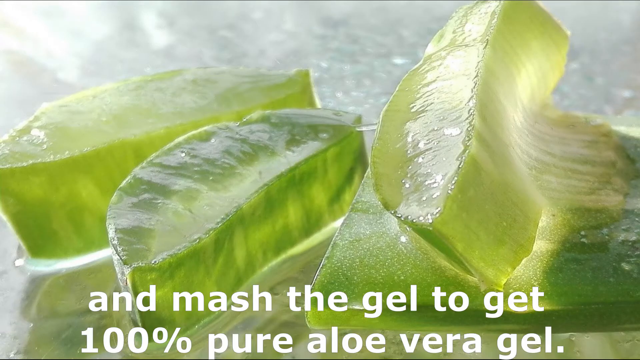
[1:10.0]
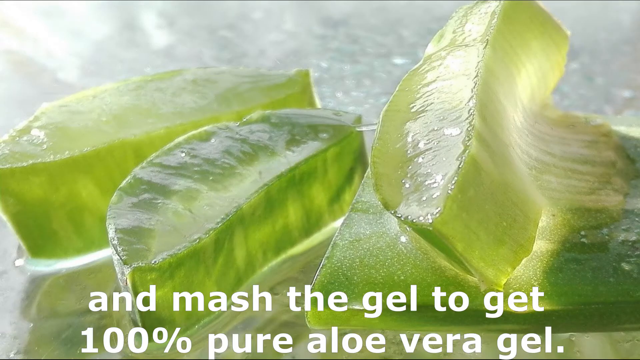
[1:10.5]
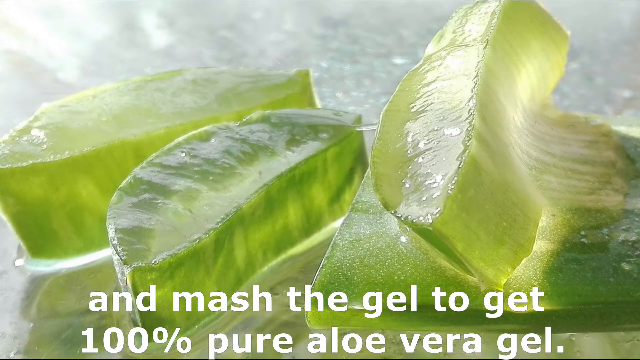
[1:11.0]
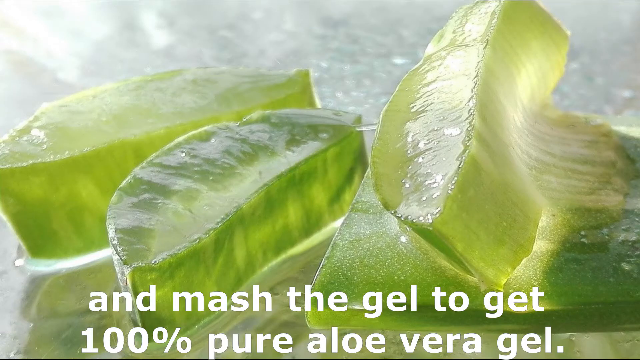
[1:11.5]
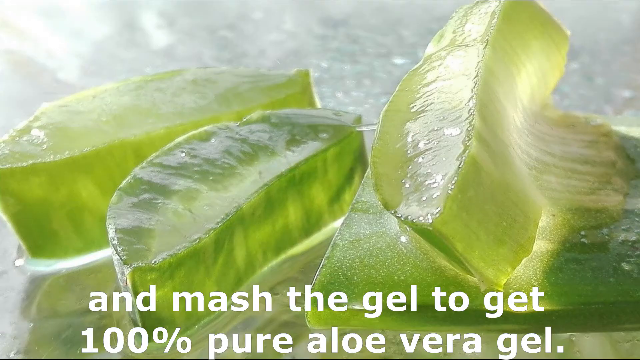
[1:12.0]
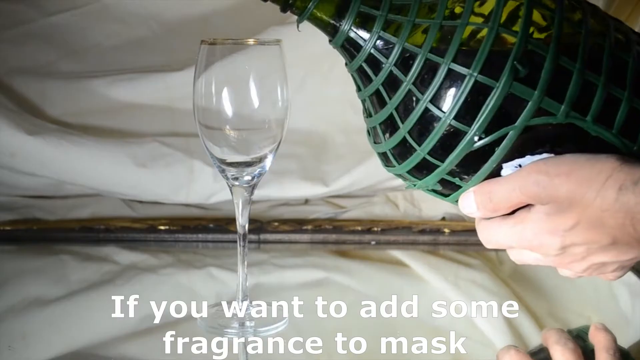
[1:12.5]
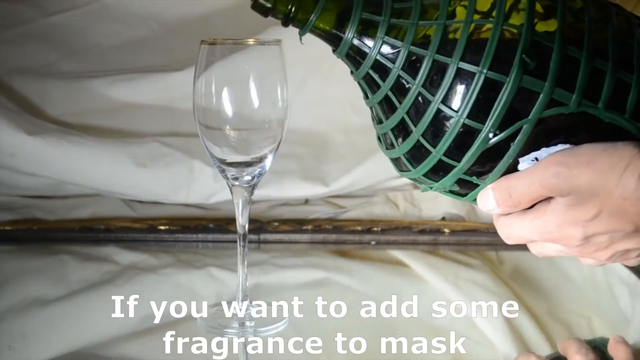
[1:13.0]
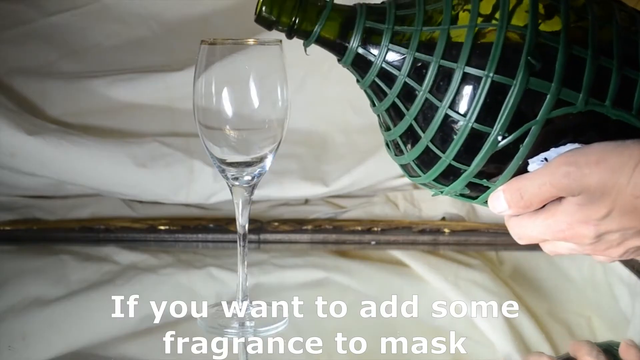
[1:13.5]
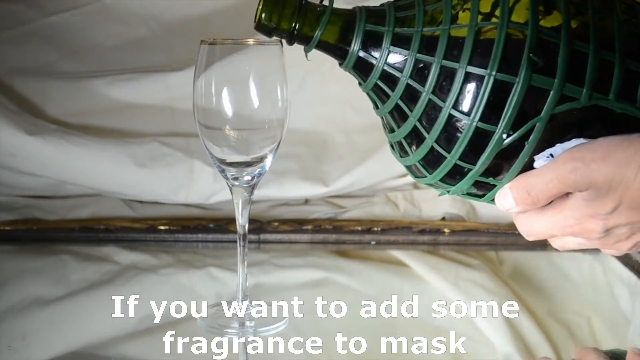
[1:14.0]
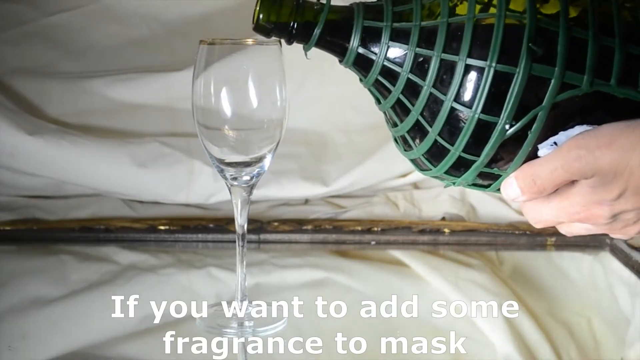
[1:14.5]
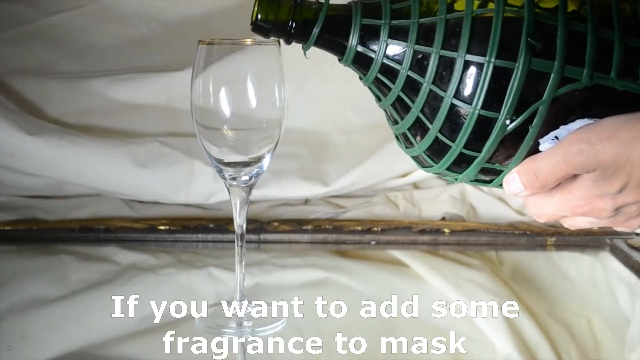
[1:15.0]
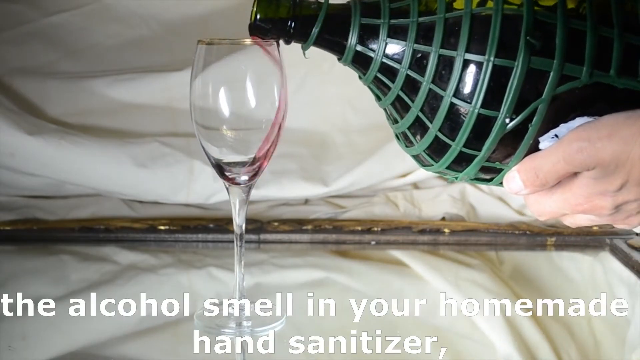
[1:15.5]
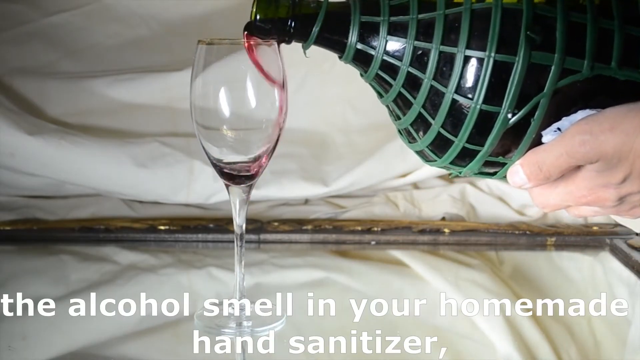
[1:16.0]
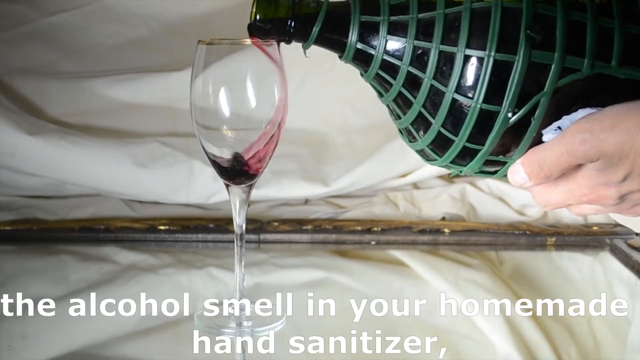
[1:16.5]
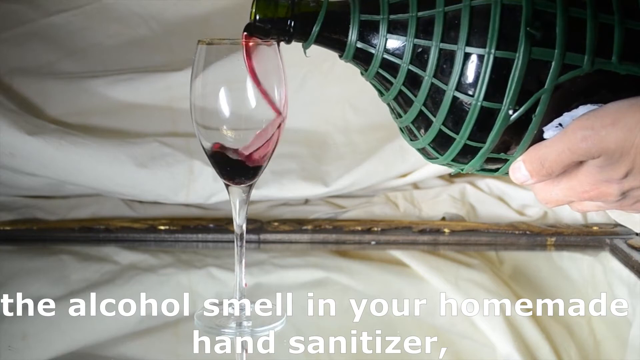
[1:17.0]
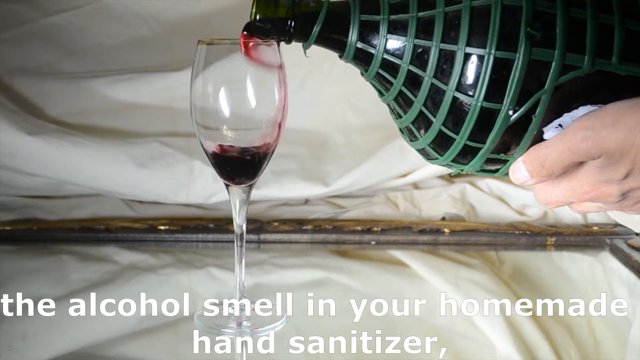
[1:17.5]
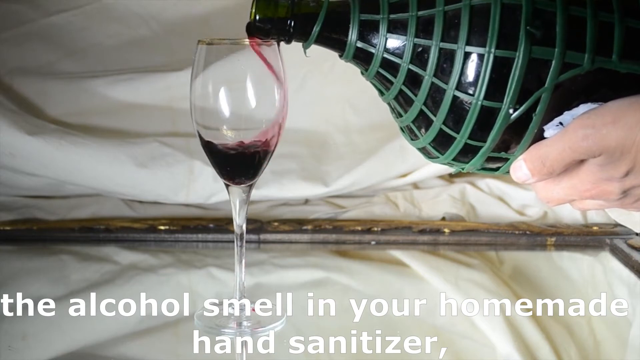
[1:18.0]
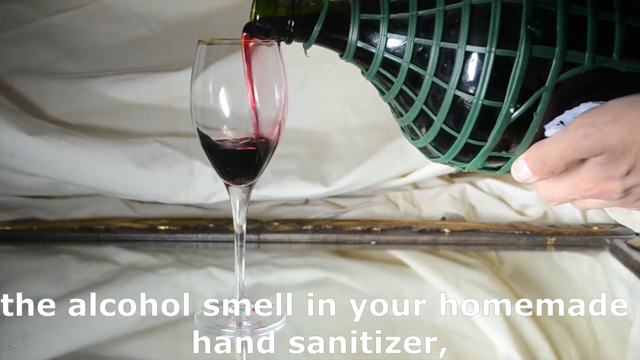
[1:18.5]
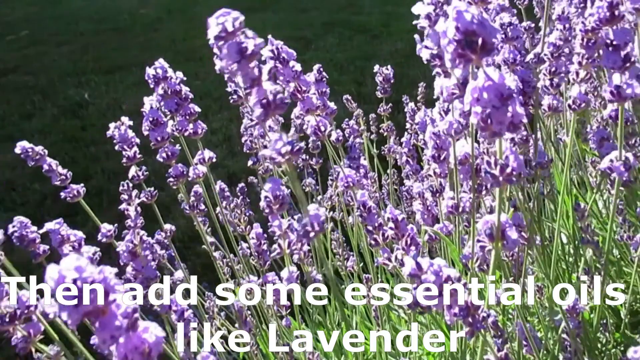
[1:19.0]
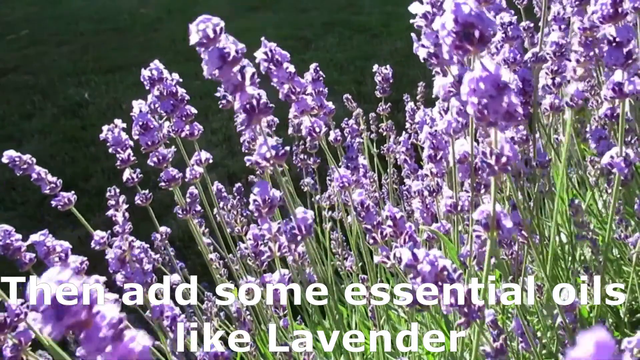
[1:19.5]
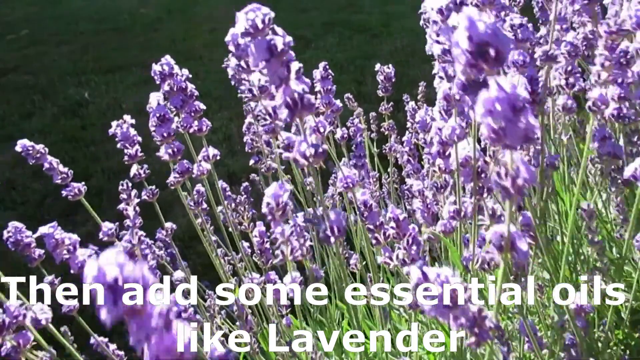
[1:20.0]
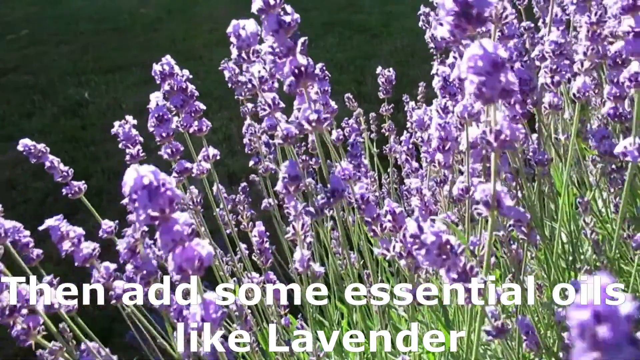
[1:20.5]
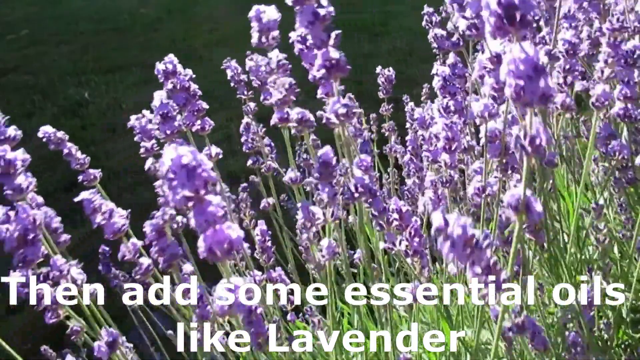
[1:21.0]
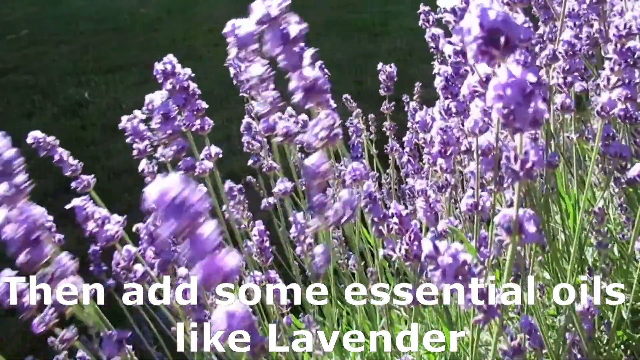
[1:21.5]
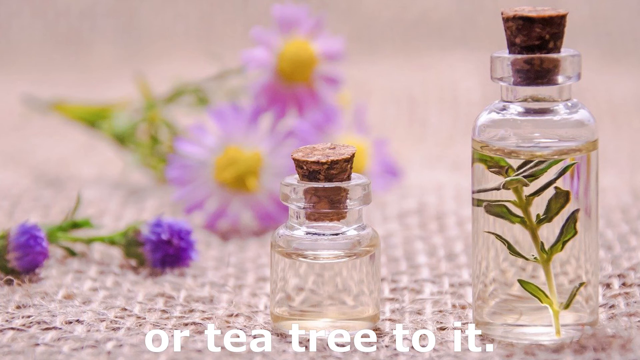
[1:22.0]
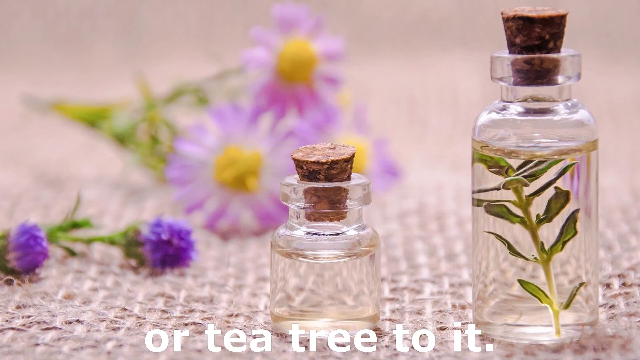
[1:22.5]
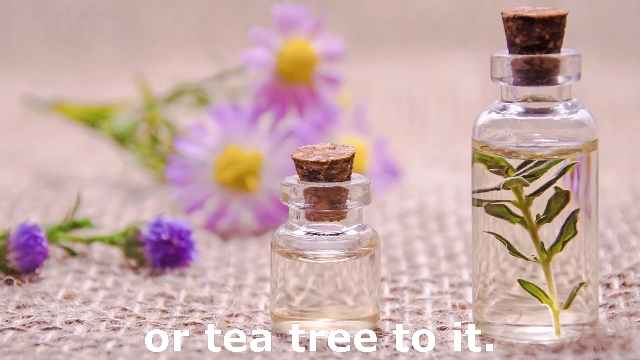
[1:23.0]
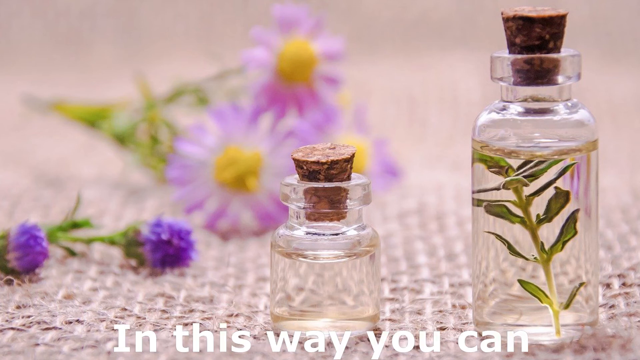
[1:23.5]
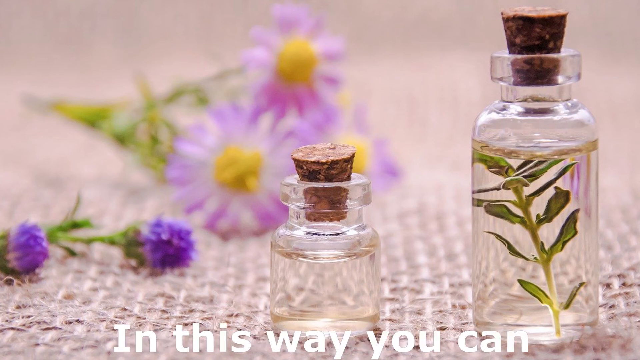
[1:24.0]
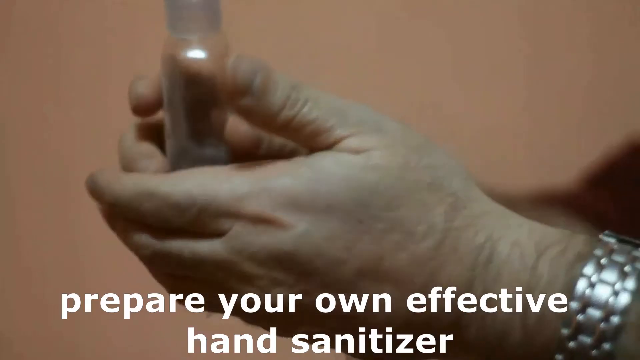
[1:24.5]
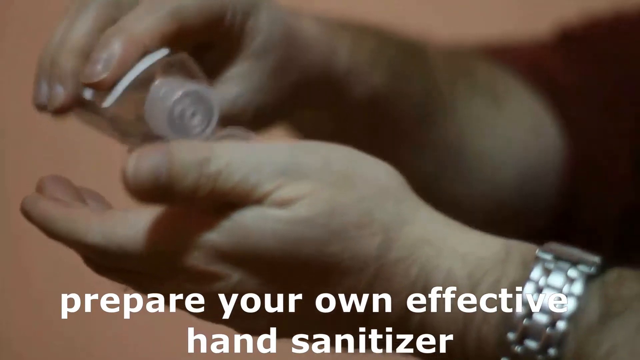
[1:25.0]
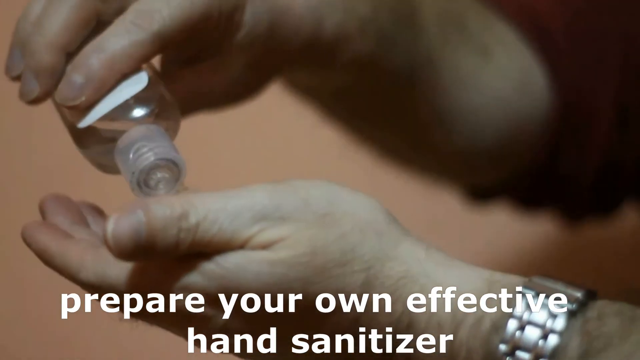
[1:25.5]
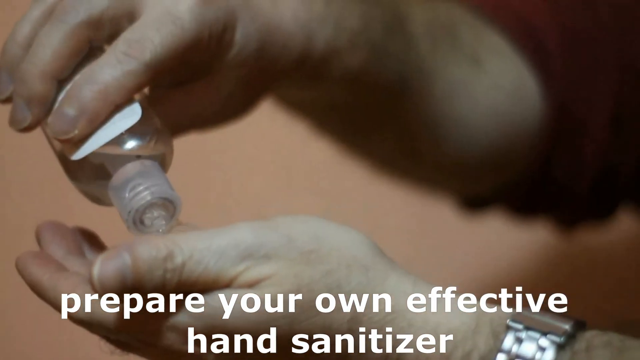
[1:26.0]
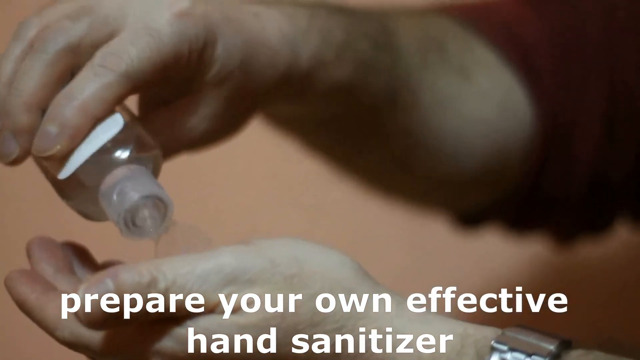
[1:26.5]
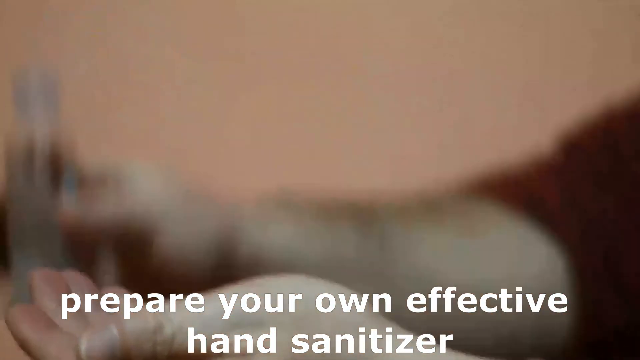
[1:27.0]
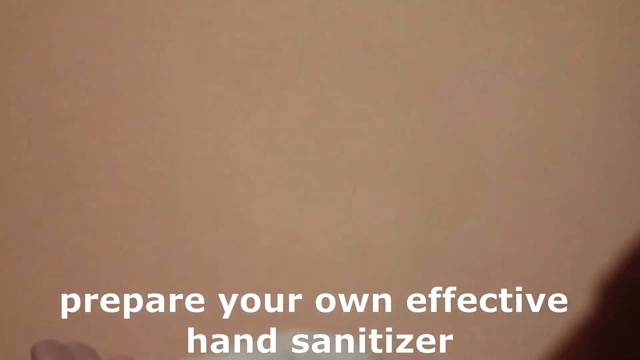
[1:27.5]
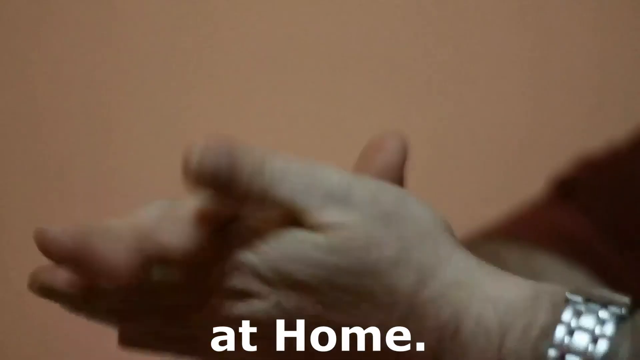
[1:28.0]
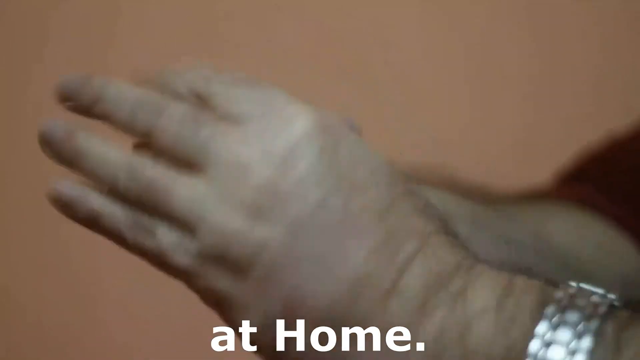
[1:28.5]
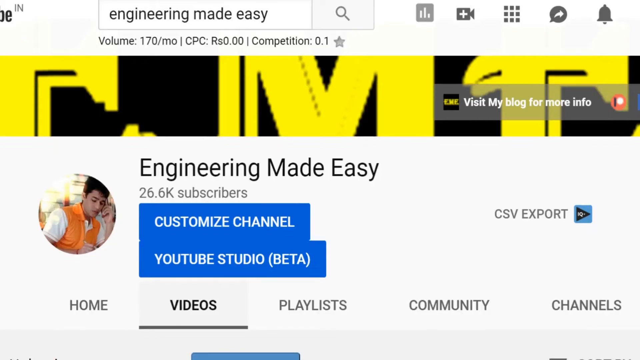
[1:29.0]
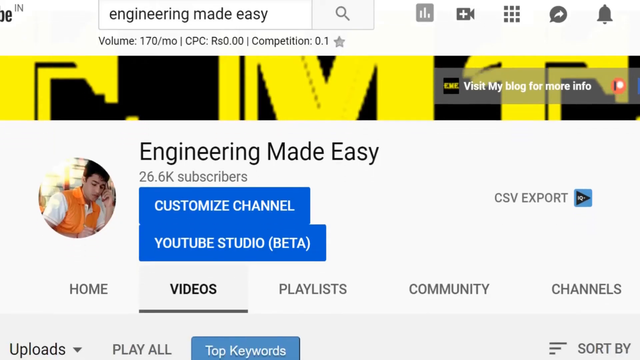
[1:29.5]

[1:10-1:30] A green plant is shown with text at the bottom reading "smash the gel to get 100% pure aloe vera gel." Someone then holds a big green bottle containing a purplish liquid and pours it into a white transparent wine glass. The video switches to tall purple plants with green stalks, along with a mention of adding some essential oils, like lavender. Next, two transparent cups are sealed with a wooden lid; the cup on the far right has something inside that looks like a plant, and in the background some plants are lying down. Someone then pours clear liquid from a bottle in their right hand into their left hand and starts rubbing their hands vigorously.